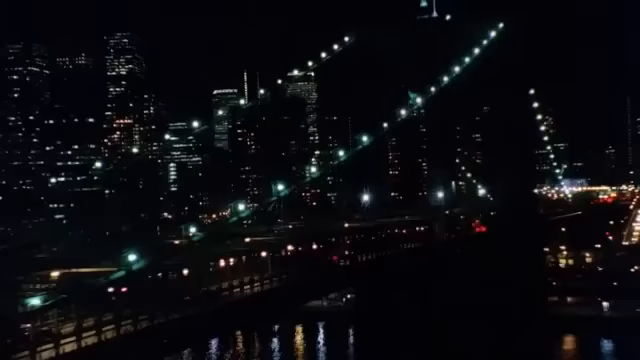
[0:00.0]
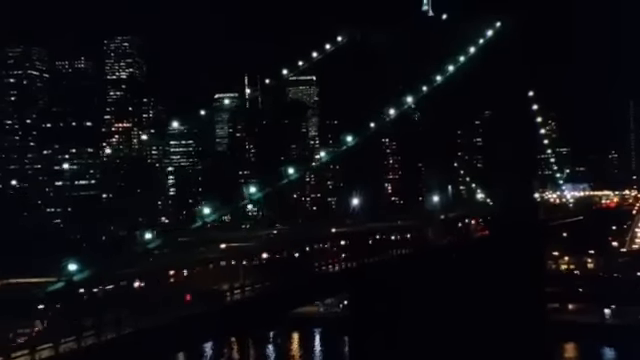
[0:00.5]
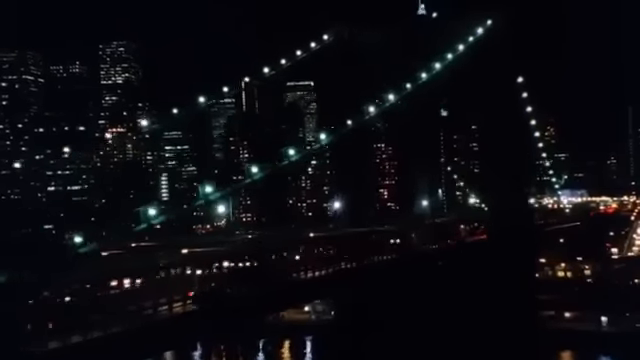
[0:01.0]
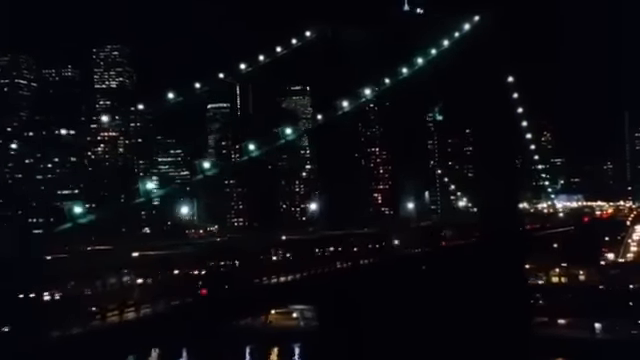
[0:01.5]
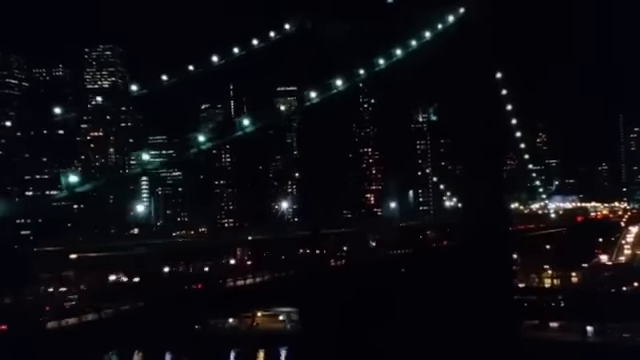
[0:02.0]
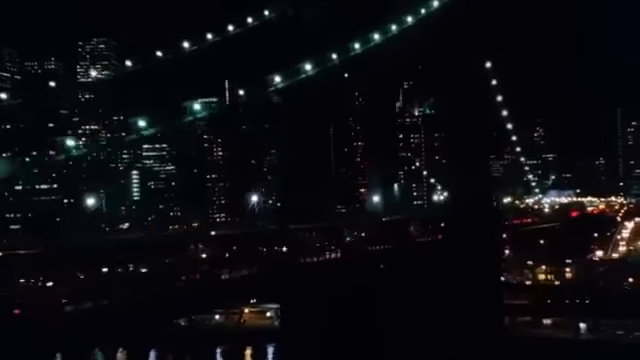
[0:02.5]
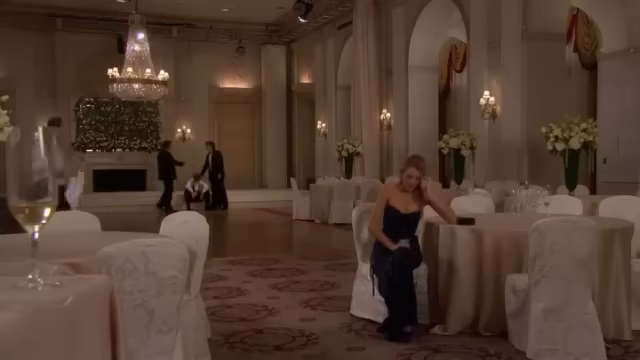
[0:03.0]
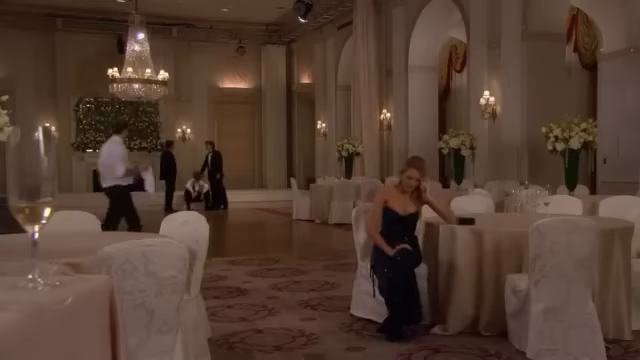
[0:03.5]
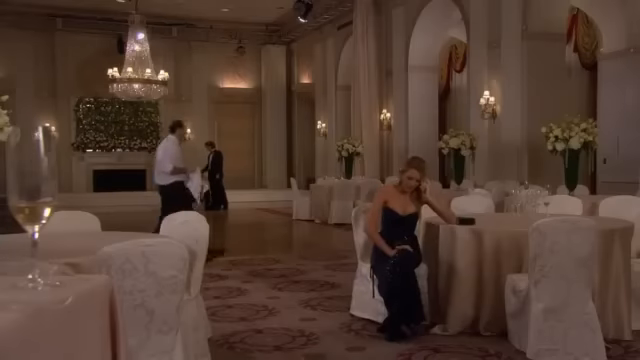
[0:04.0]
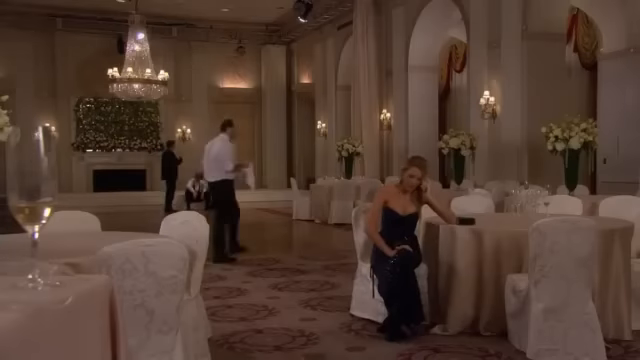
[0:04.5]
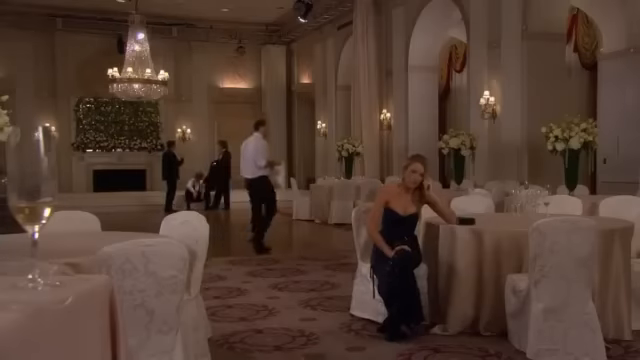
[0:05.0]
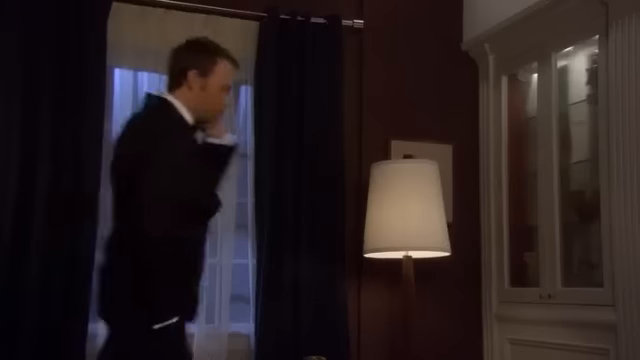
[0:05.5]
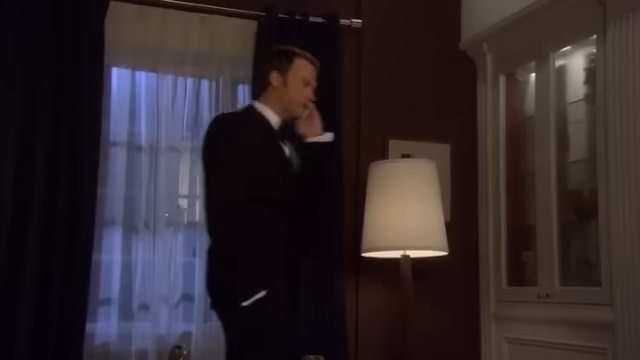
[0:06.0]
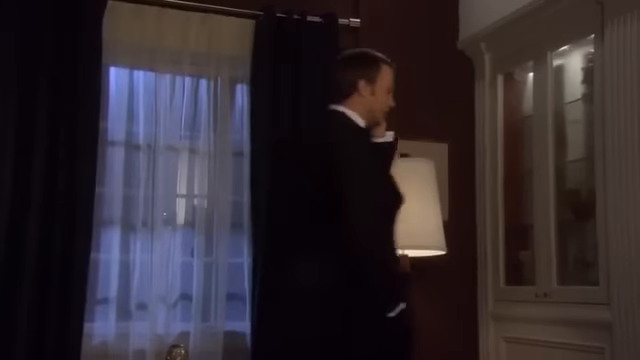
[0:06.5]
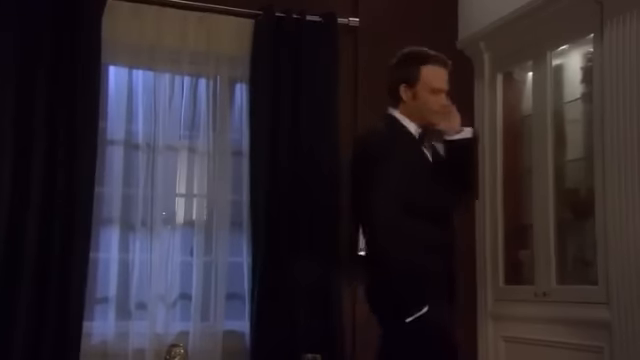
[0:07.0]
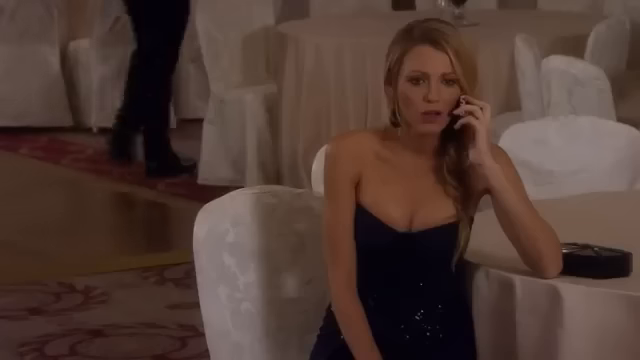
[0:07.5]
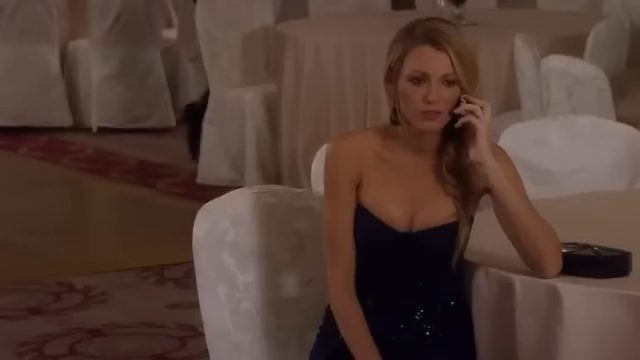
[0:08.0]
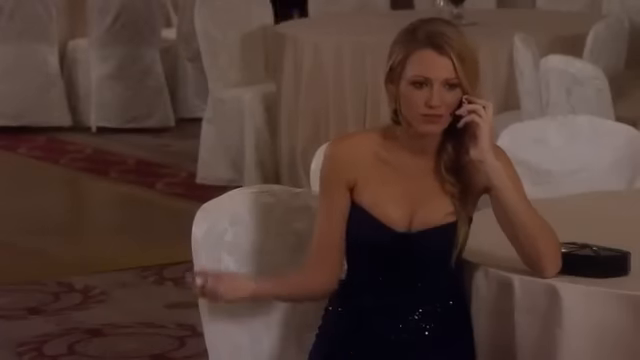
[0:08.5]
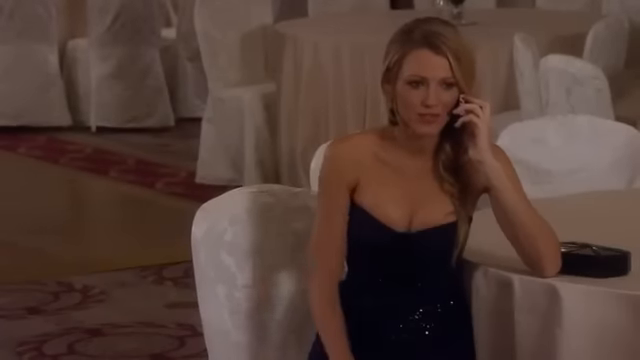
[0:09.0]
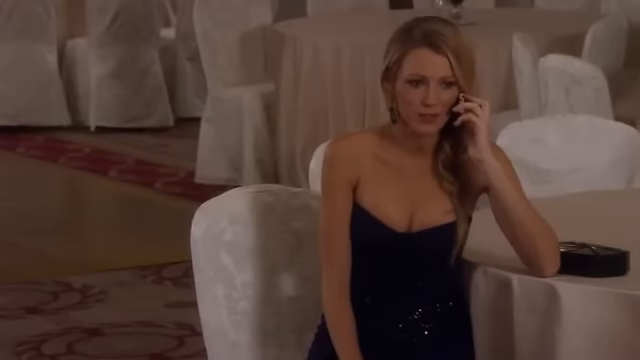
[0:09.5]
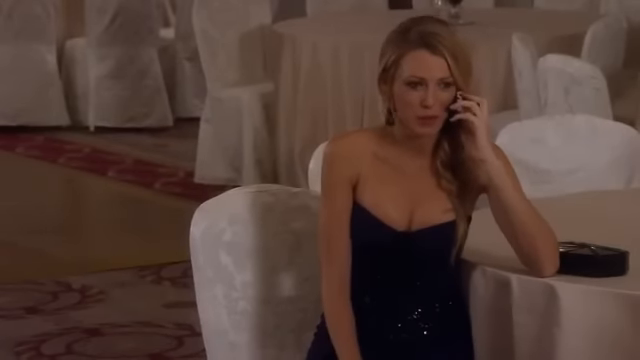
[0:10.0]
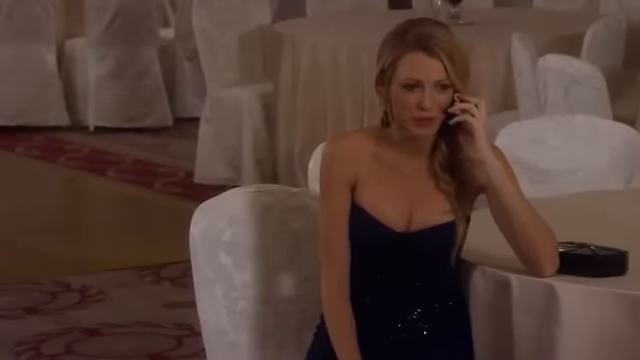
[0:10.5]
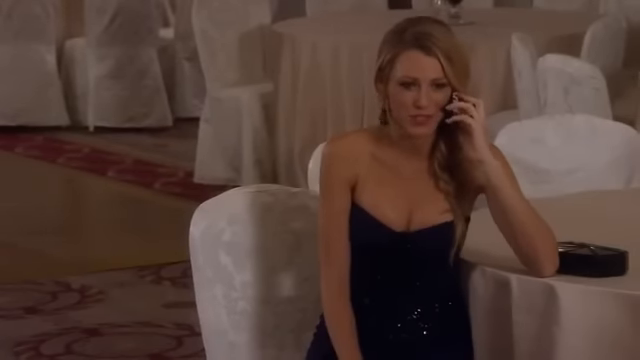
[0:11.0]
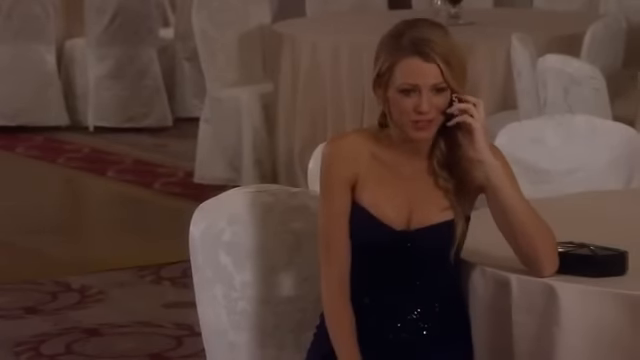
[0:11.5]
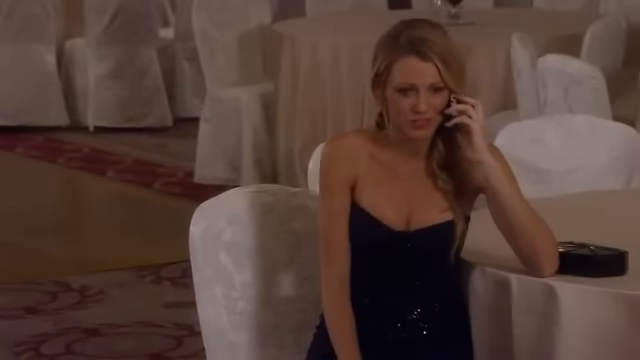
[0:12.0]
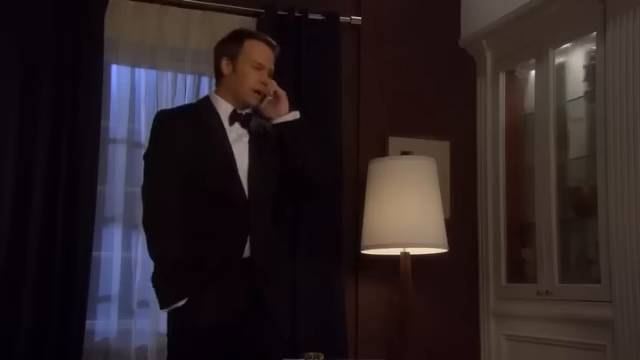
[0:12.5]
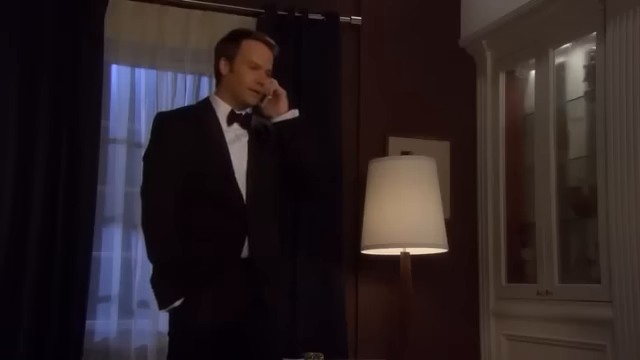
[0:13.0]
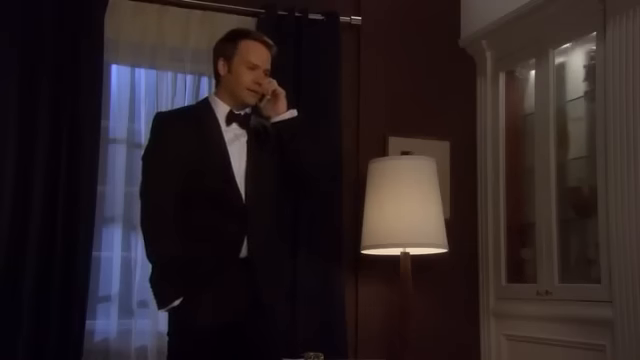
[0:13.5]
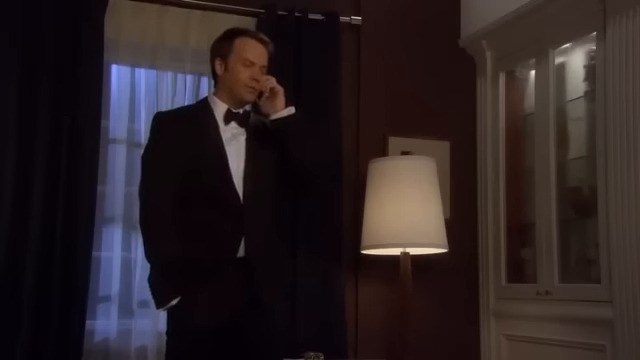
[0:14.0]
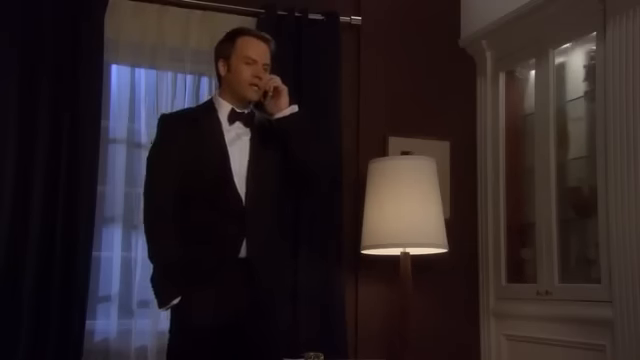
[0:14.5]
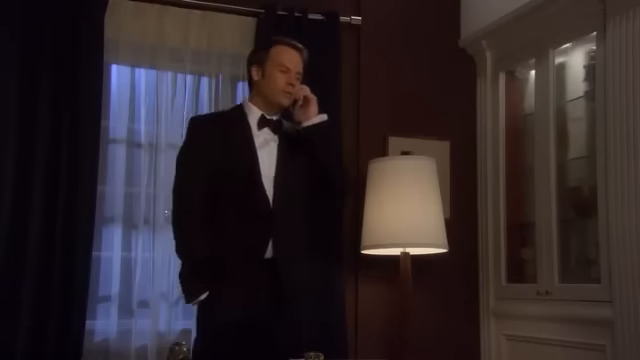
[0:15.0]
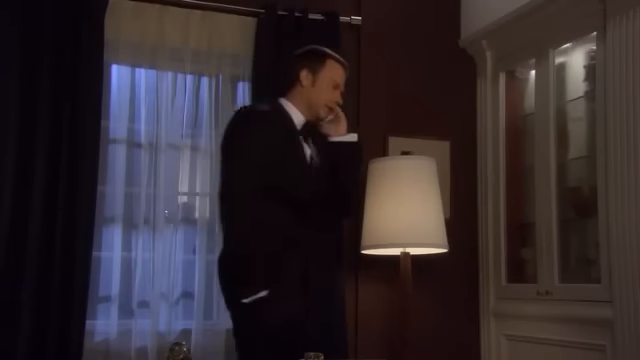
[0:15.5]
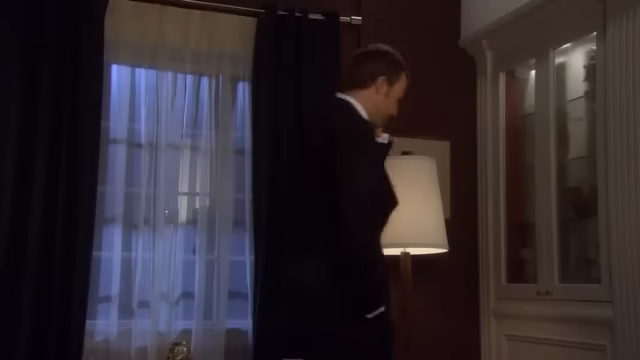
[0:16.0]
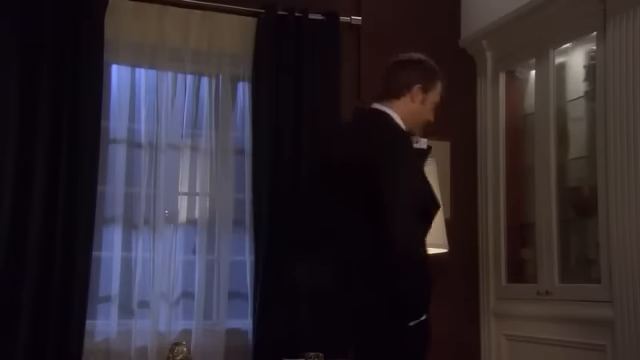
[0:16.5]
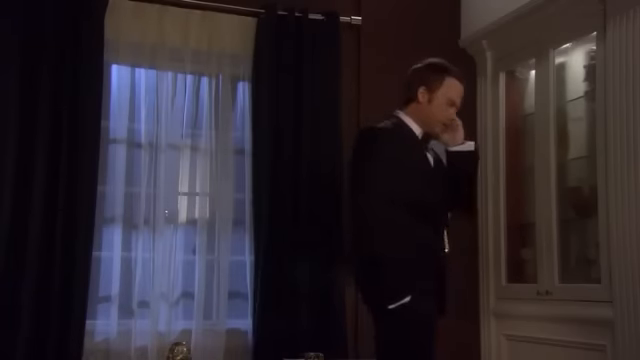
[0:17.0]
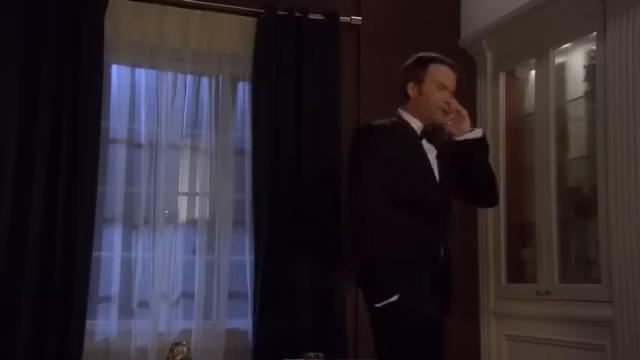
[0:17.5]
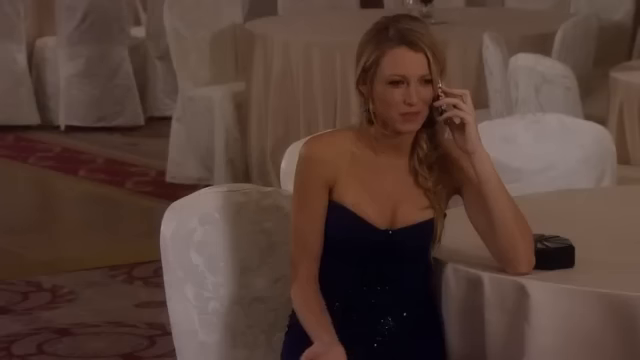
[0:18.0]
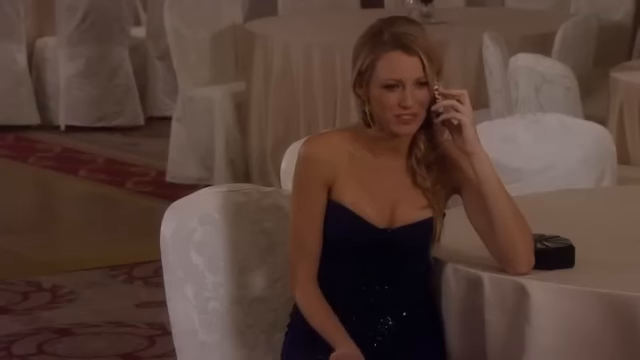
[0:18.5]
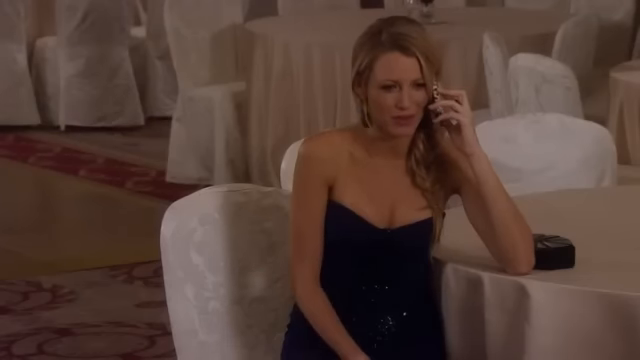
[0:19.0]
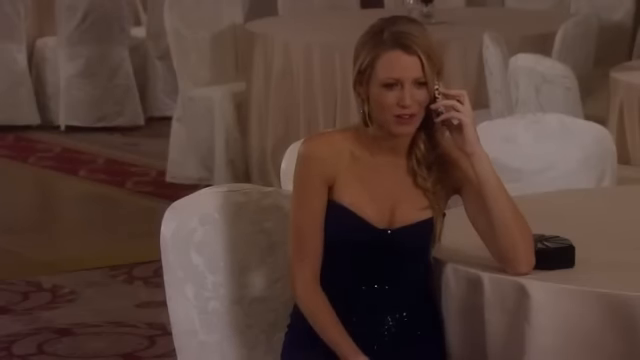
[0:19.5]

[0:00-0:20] A city at night appears, with many lights and a bridge lit up with lights. The scene then moves to a hotel, where a man on the microphone speaks to somebody. A woman appears, and the man wears a tuxedo. The woman wears a blue dress and some kind of earrings. The man speaks in a hotel room, and the conversation continues. Behind the woman are many tables with white chairs. Behind them there is a window with curtains, and on the right there is a dark shelf. A glass and a lamp are behind them. The man walks behind the woman.